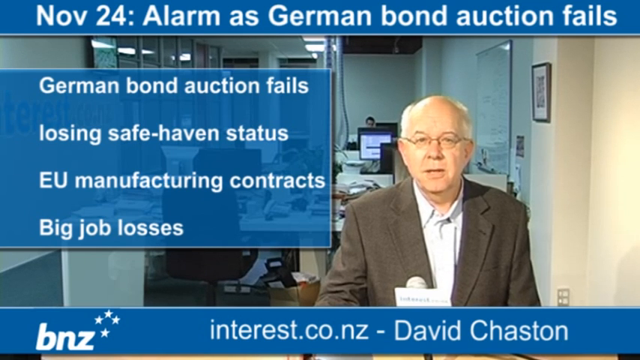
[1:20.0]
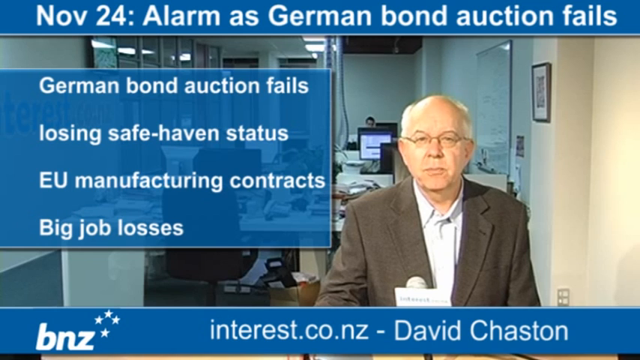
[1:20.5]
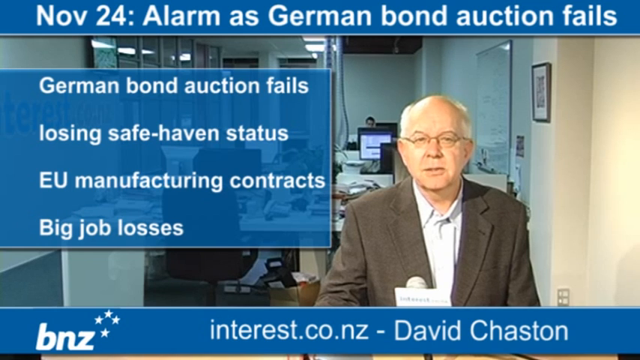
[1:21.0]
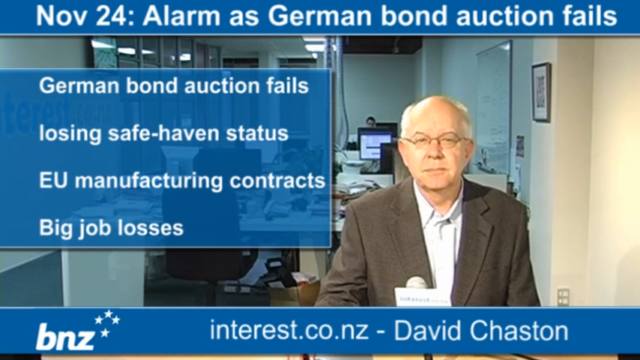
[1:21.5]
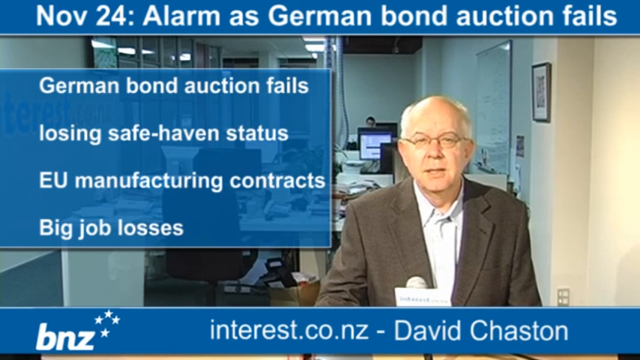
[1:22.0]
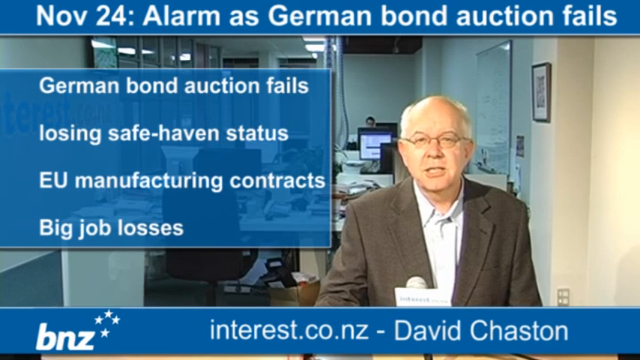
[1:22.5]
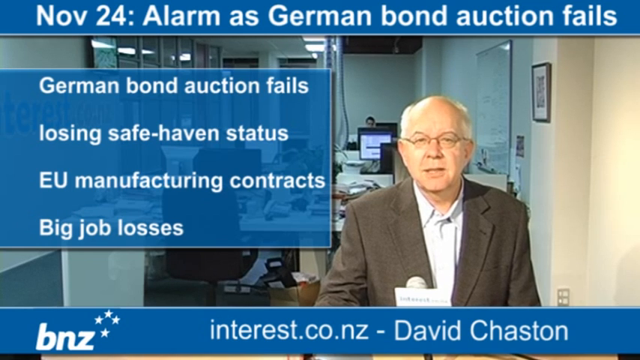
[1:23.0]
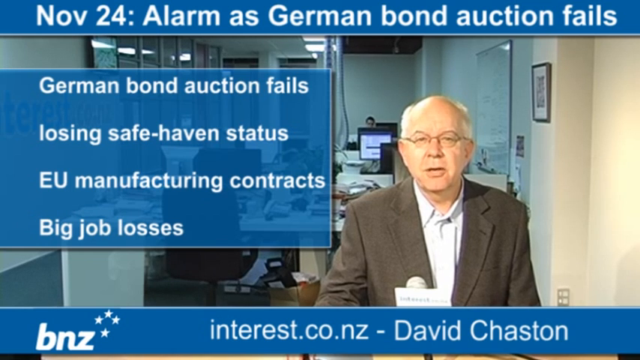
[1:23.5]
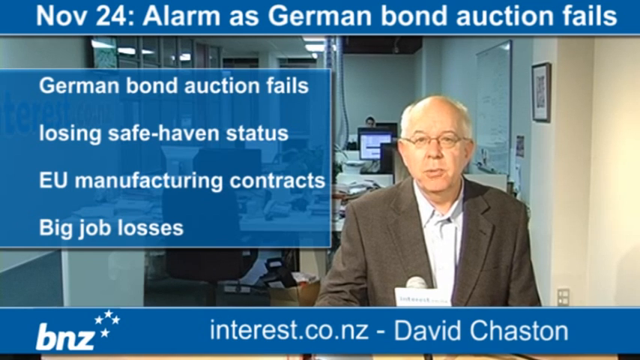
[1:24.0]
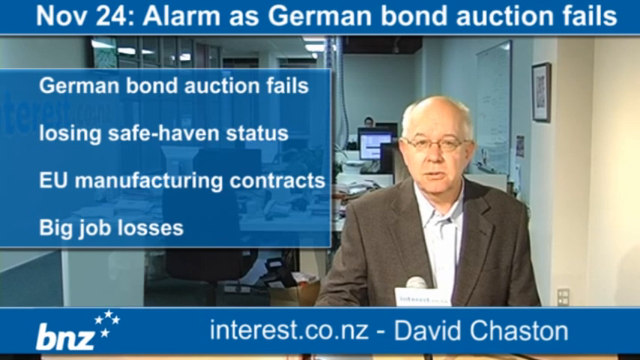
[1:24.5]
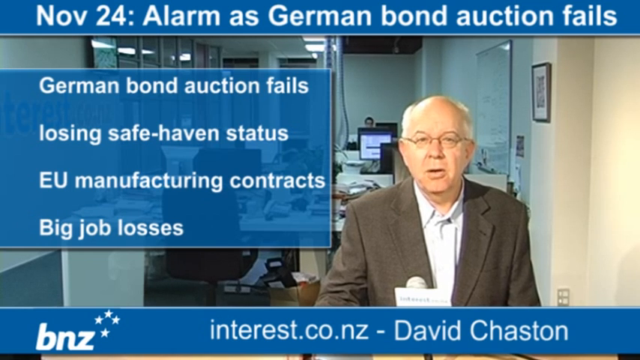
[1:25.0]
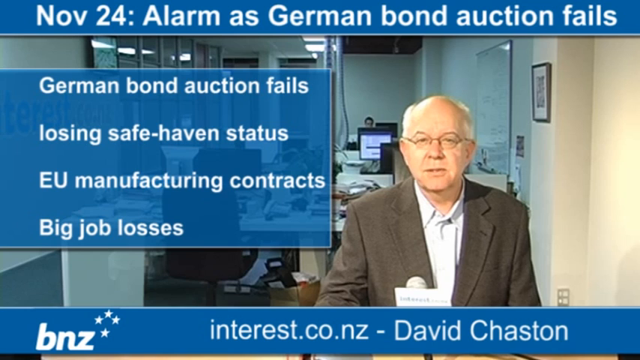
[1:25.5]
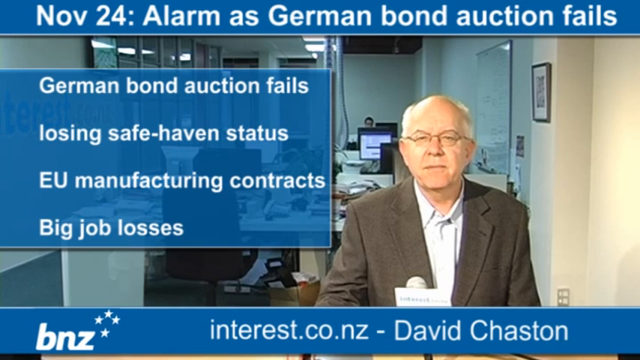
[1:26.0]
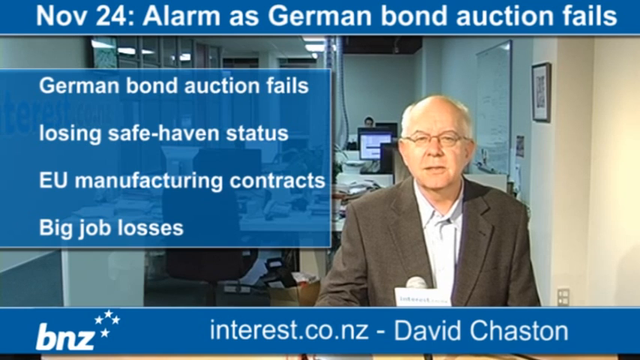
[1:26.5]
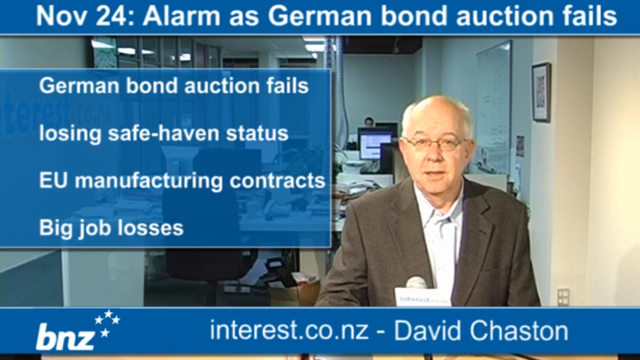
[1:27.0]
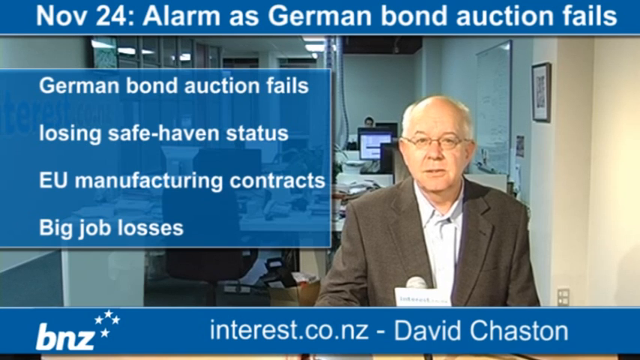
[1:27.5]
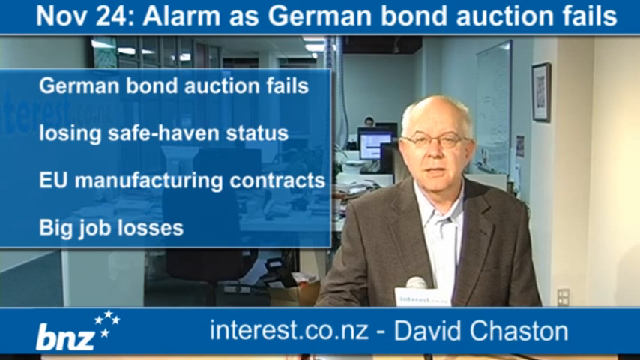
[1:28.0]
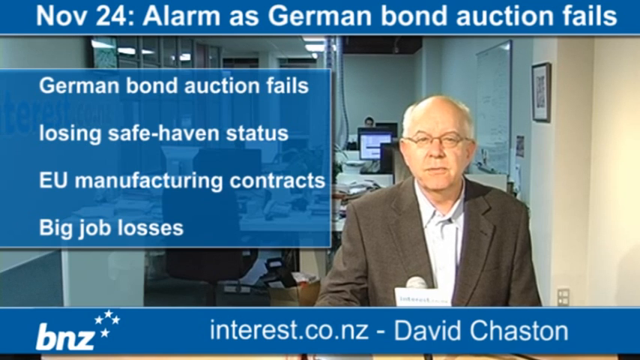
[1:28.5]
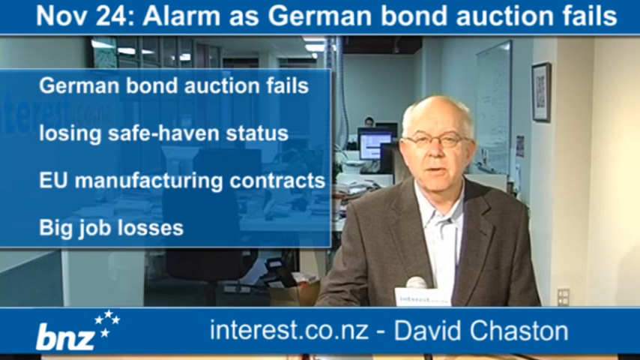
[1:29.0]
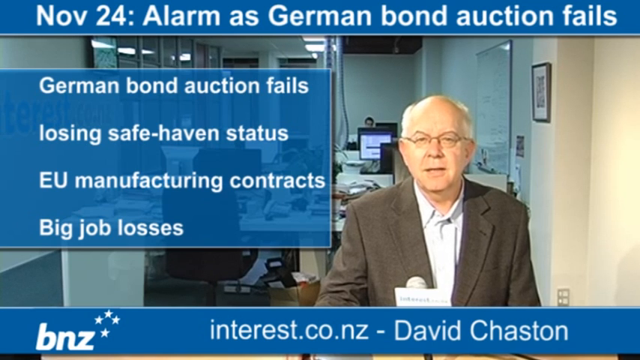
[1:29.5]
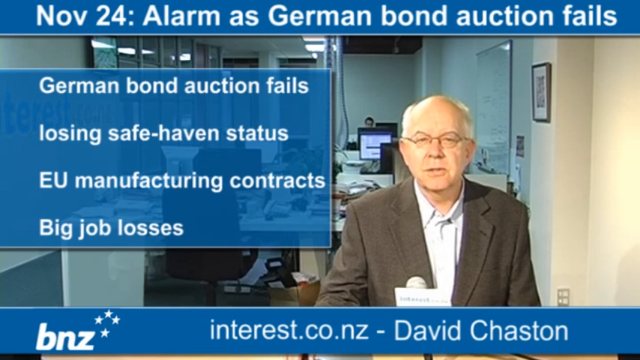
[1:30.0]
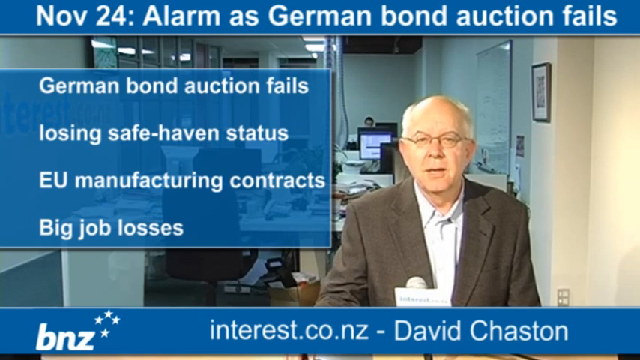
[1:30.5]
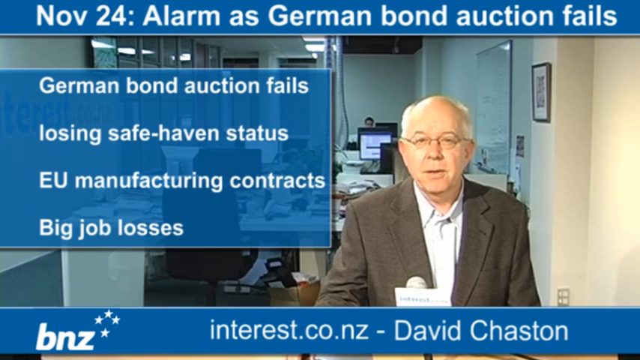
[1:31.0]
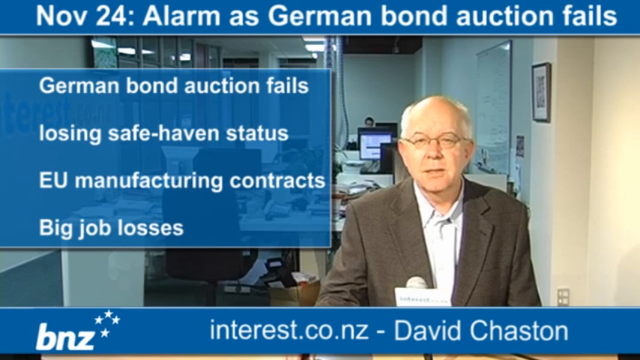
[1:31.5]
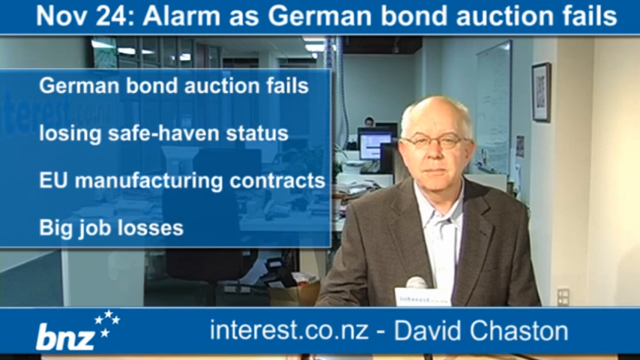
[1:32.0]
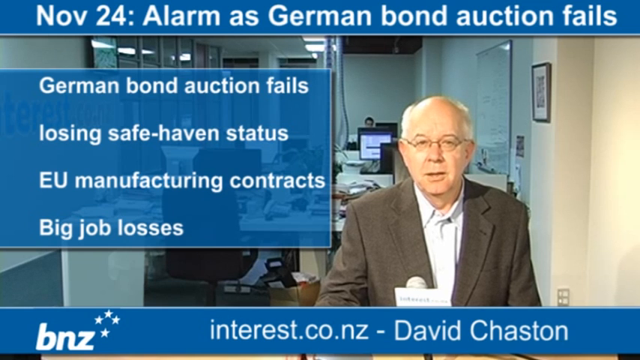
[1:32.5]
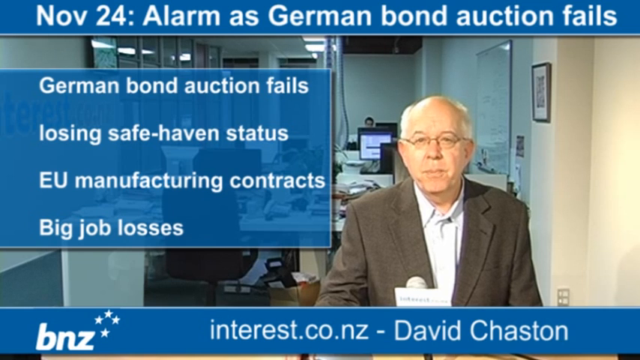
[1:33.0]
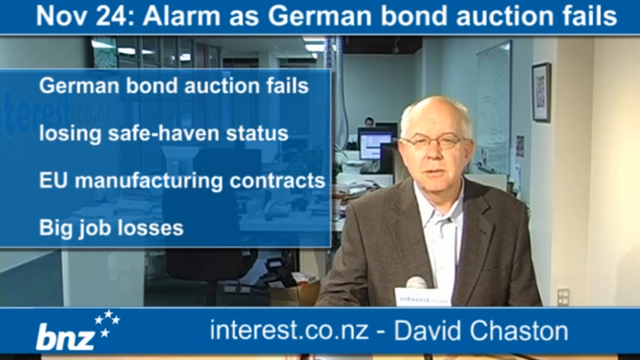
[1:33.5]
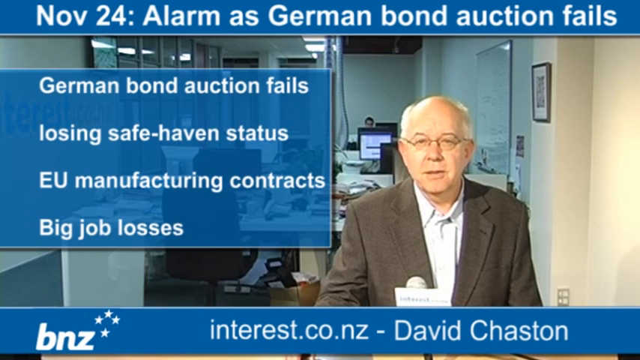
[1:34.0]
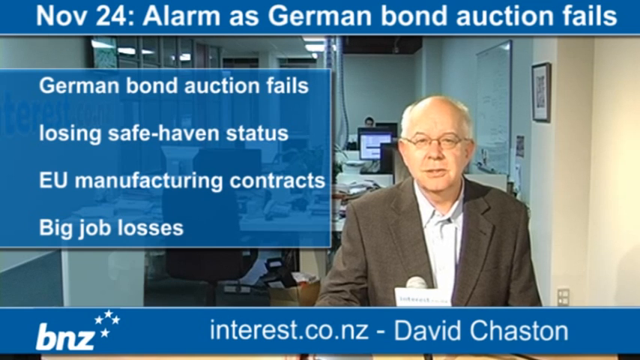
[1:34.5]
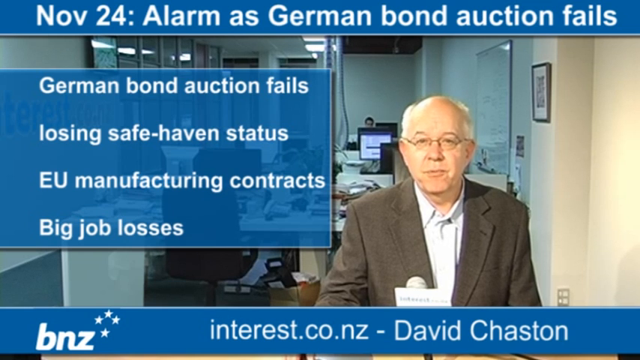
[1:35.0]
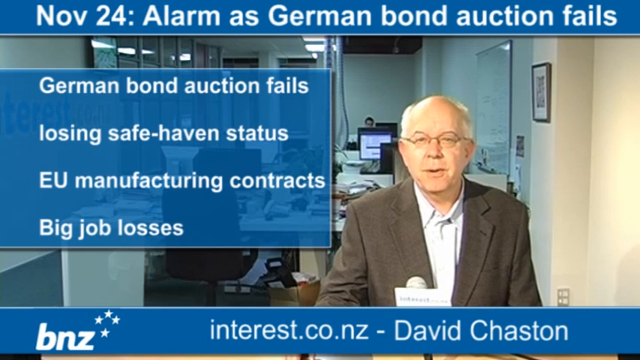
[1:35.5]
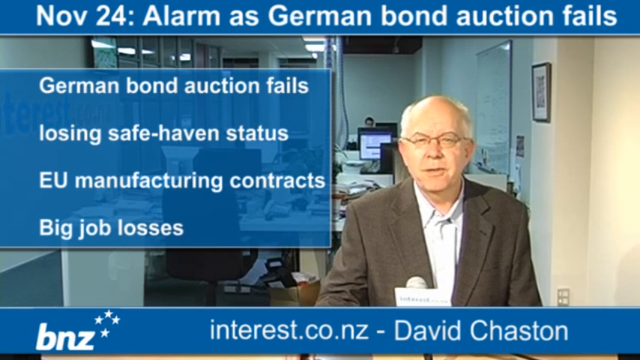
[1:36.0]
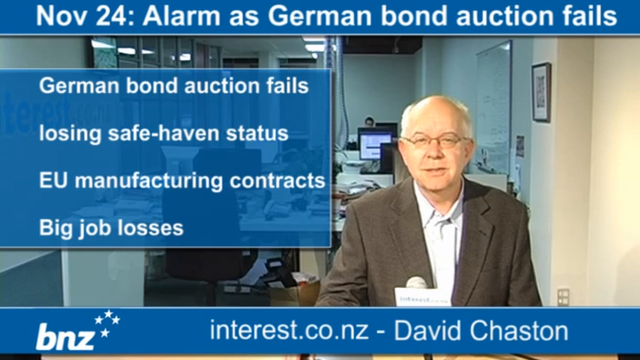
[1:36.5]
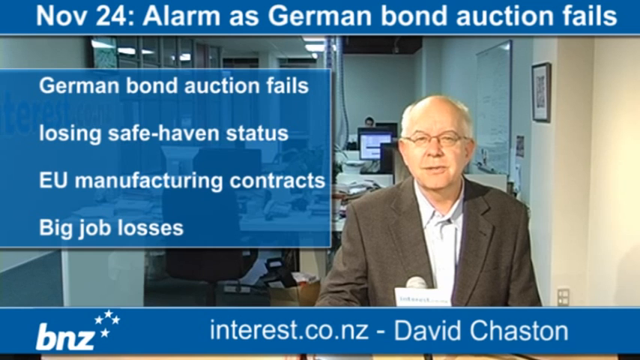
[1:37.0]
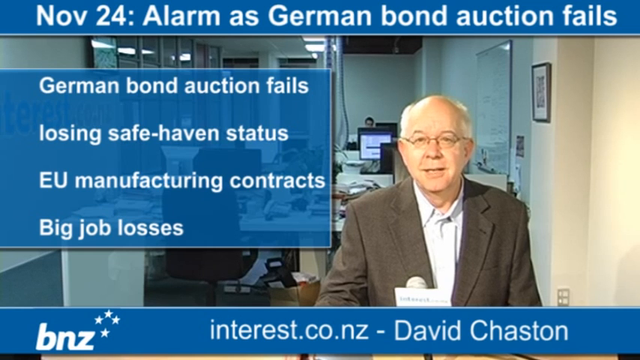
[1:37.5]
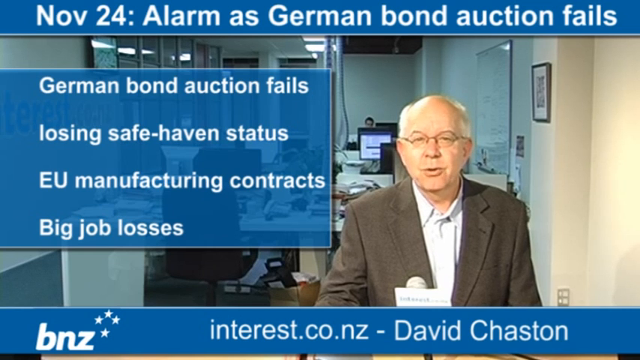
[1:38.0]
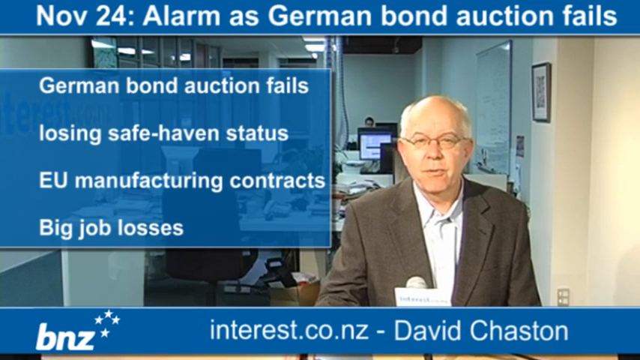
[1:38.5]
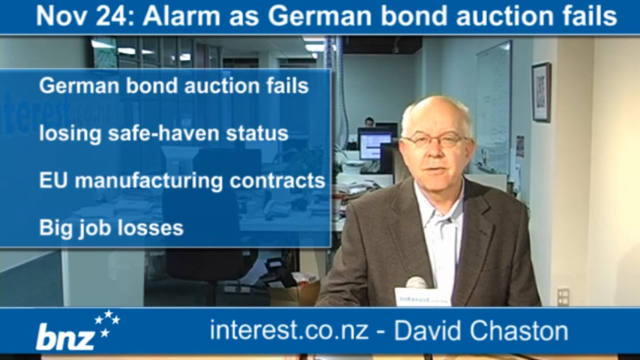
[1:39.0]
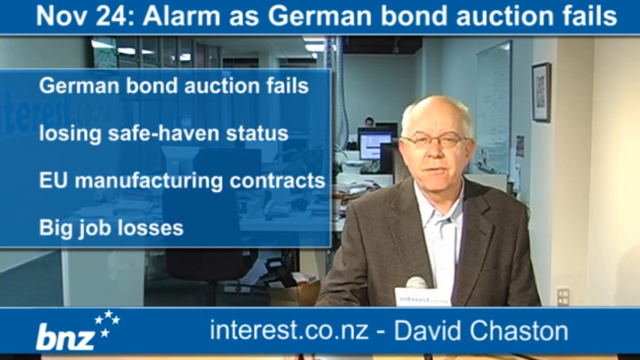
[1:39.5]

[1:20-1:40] The same text remains: "German bond auction fails, losing safe haven status, EU manufacturing contract, big job losses." The old white man, David, is still talking to the microphone, with people in the background working at computers. There is no newsreel footage; it is the same kind of shot as before. The footage looks very old, apparently from around the late 2000s, like 2008 or 2009.